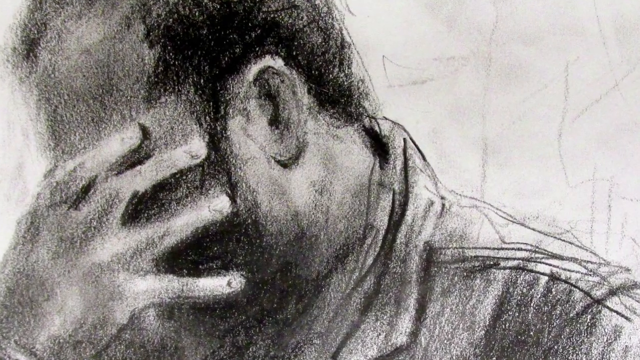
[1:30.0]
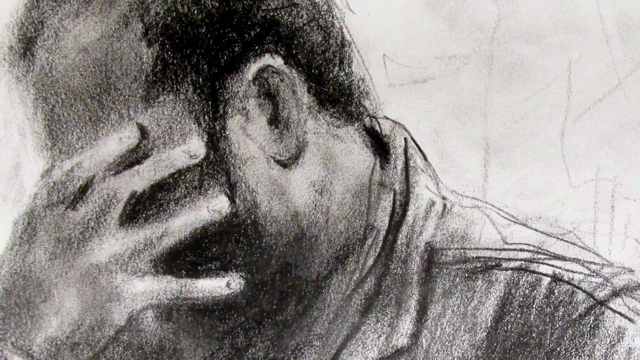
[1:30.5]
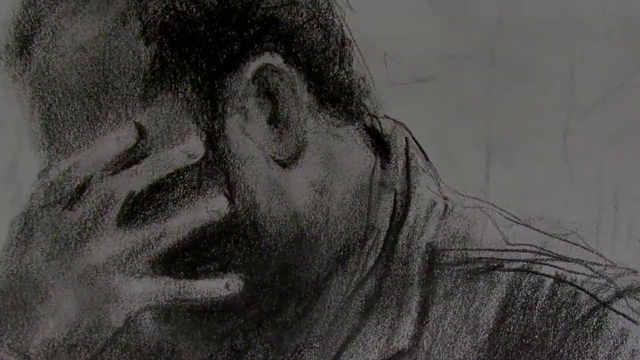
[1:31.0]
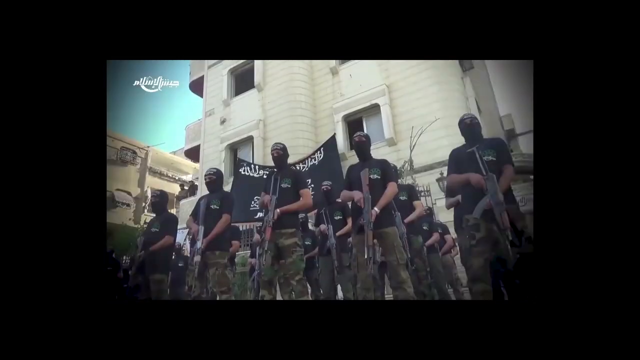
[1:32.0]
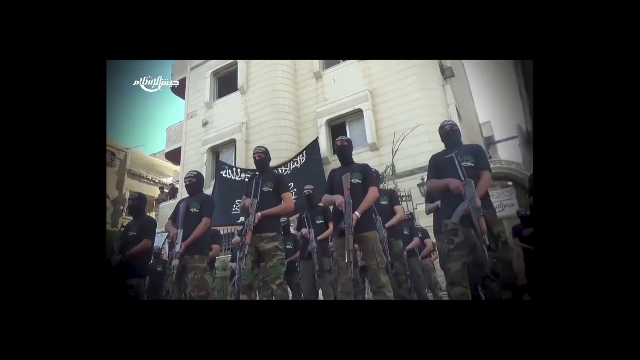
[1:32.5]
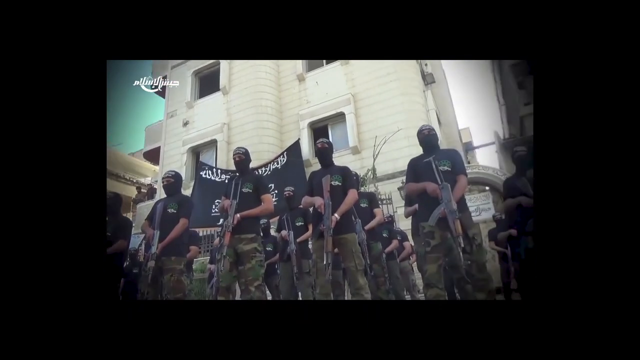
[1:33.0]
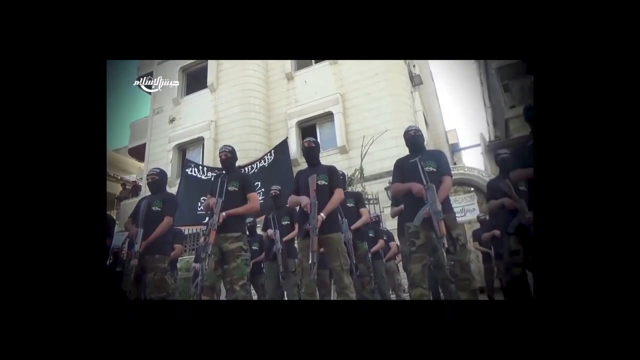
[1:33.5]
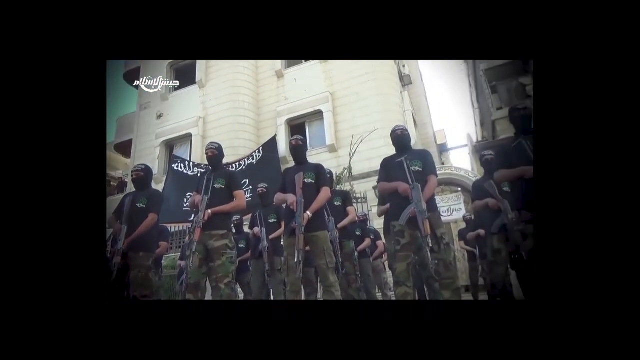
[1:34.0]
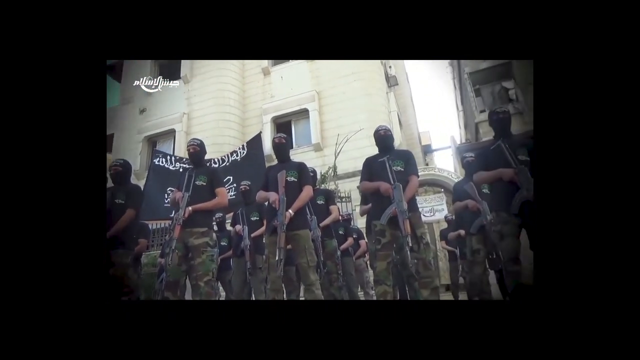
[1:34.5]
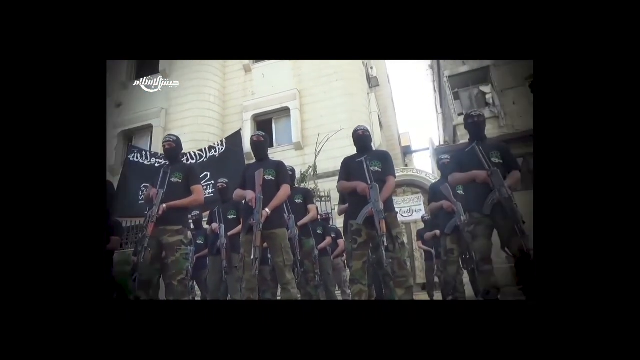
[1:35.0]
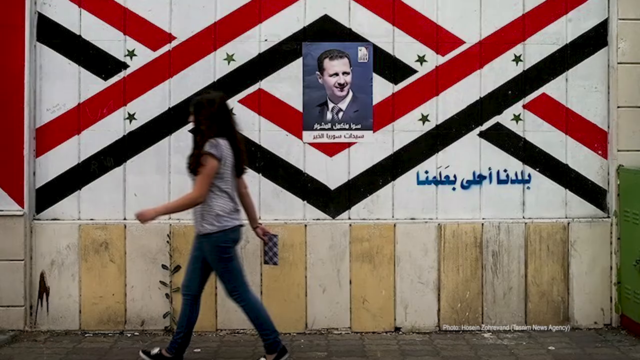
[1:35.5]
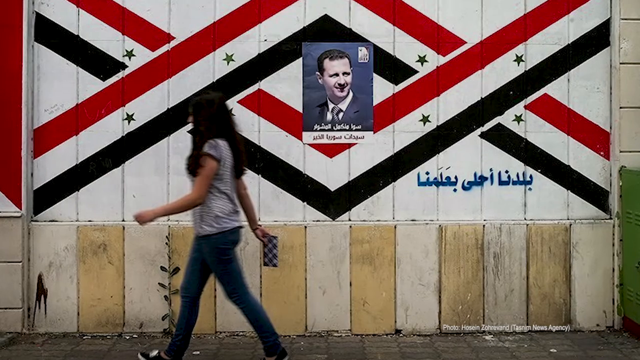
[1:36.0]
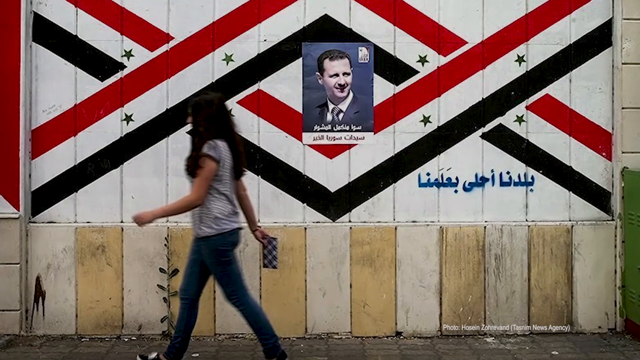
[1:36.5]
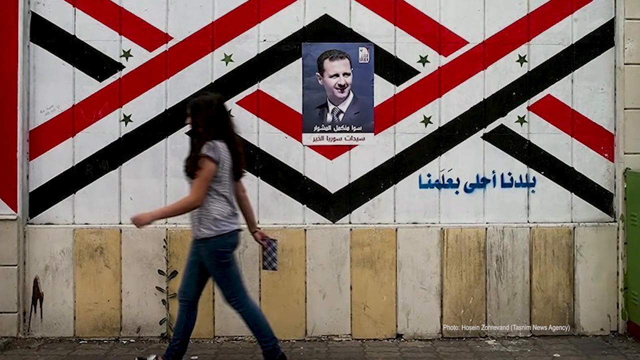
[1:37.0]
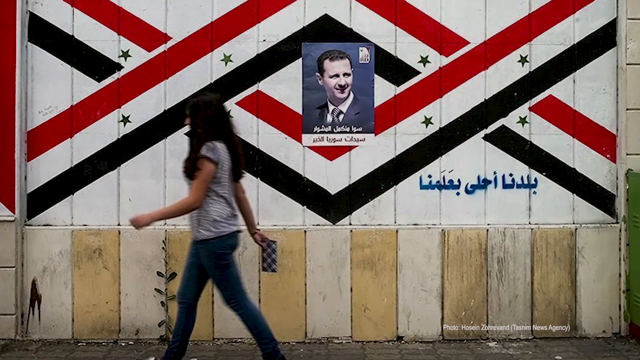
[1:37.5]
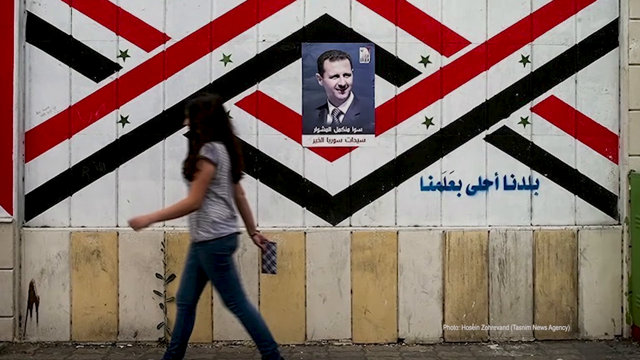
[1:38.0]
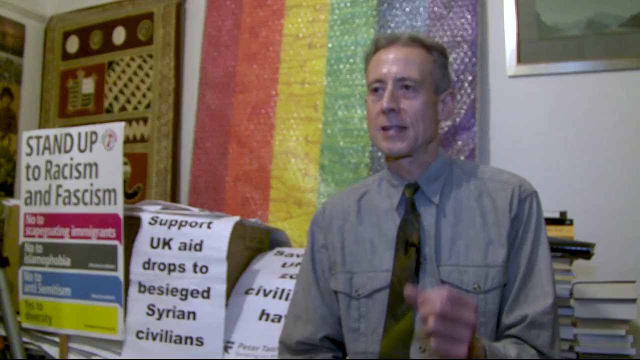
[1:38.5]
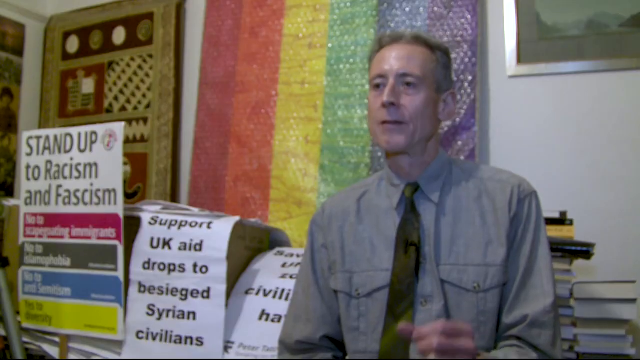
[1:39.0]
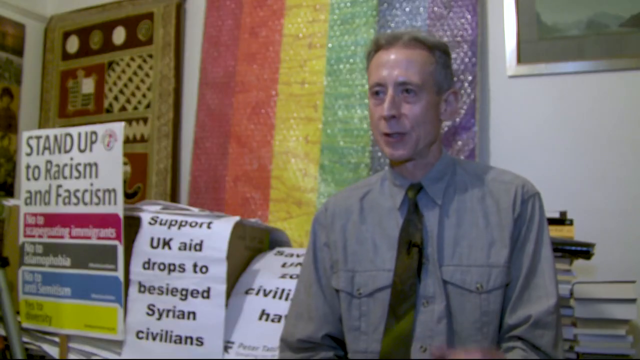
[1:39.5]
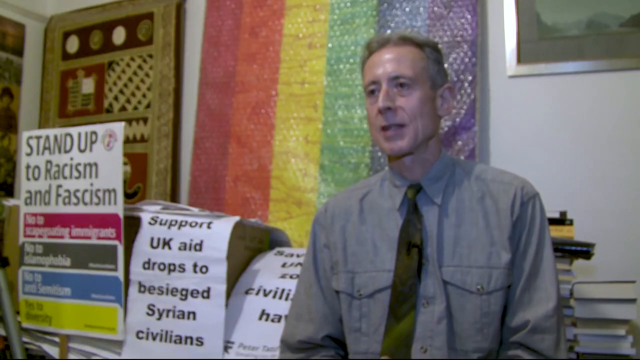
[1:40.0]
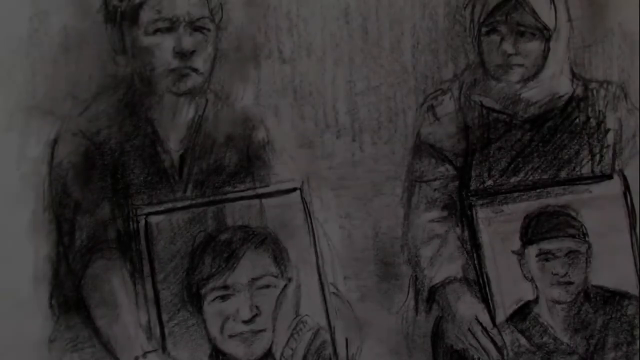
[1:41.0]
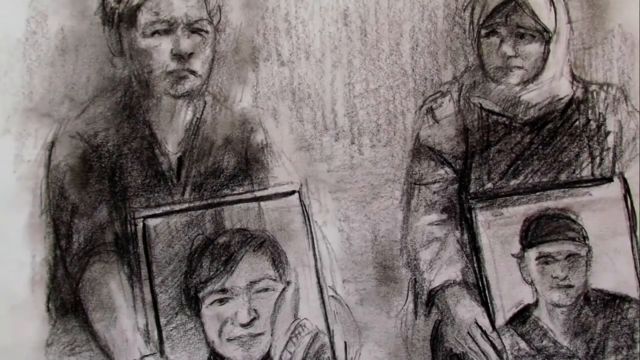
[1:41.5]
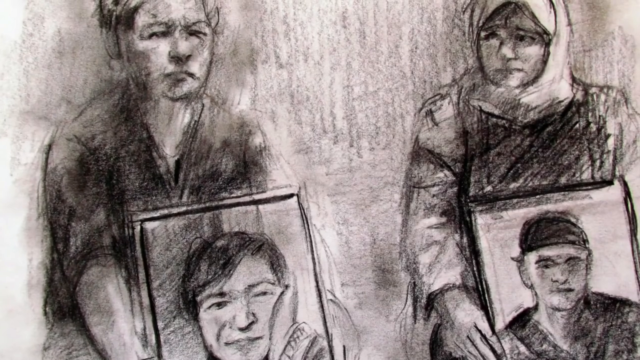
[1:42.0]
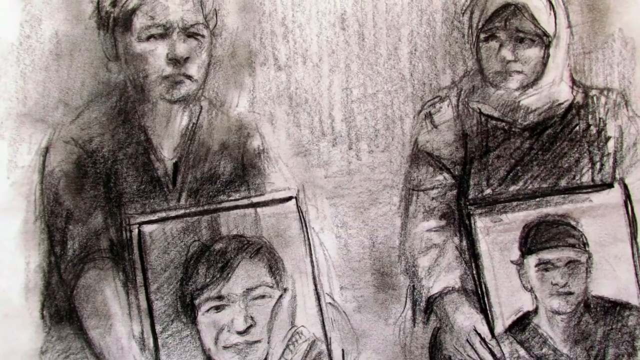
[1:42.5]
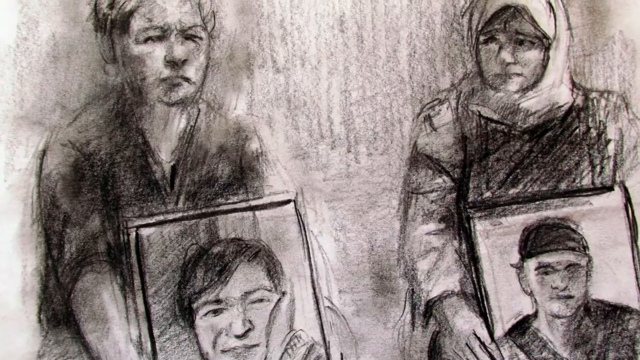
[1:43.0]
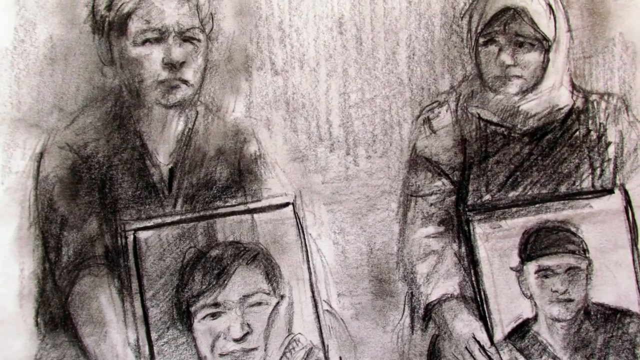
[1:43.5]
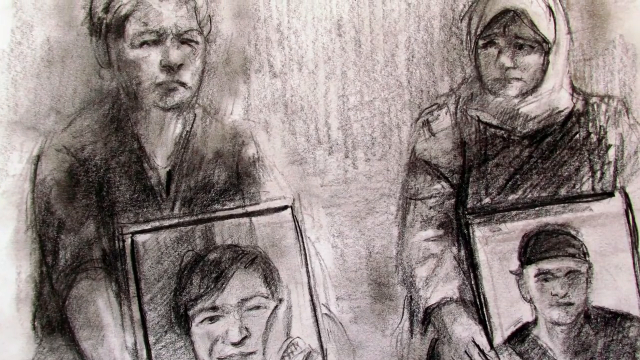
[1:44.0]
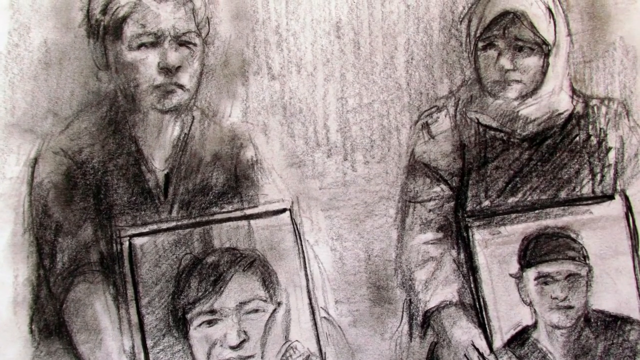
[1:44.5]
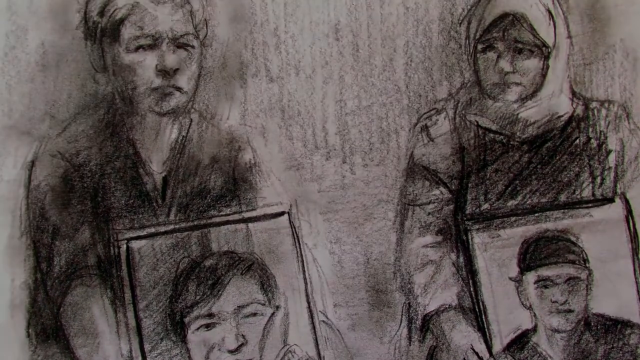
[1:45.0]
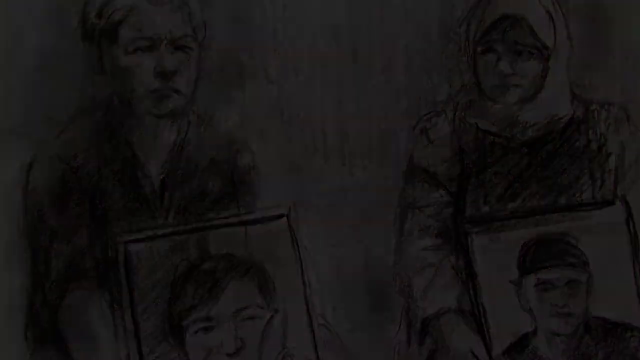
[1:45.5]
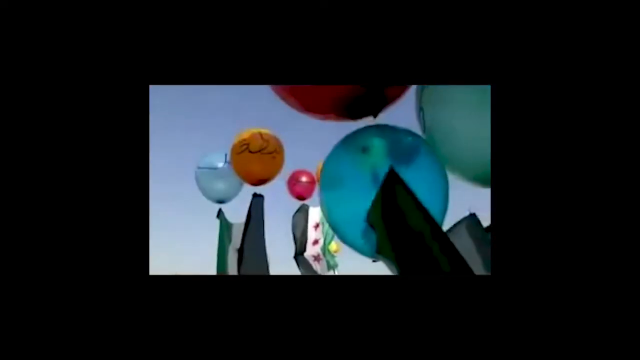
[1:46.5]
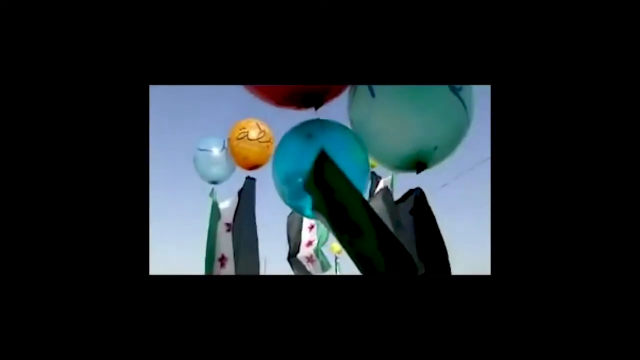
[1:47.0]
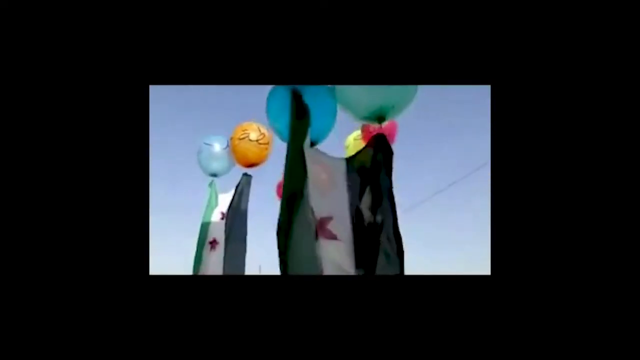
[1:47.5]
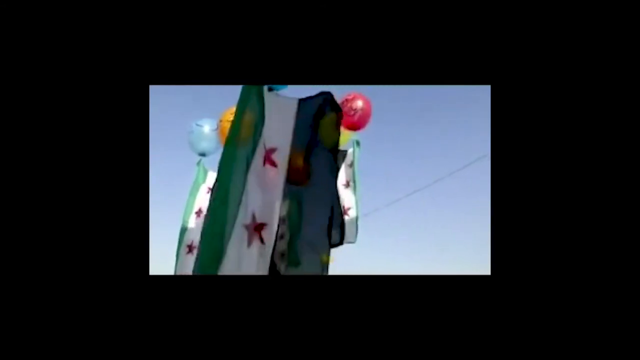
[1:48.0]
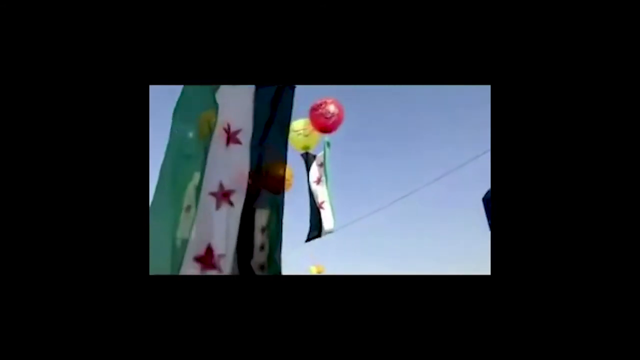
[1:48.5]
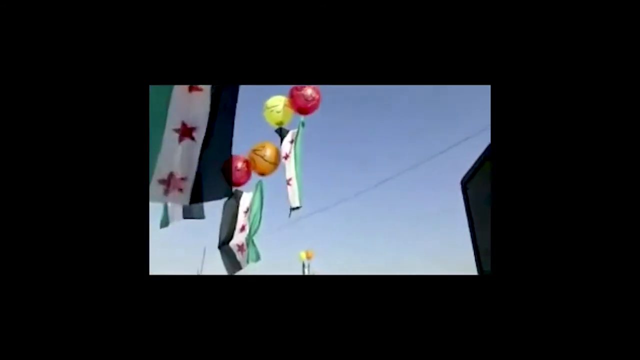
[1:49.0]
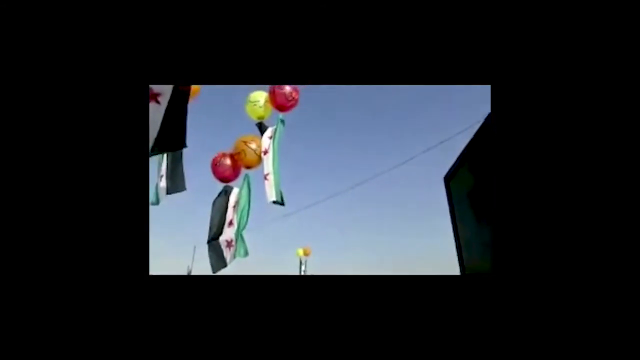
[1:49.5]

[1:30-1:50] People covering their faces carry big bags of guns. A mother carries a picture, apparently of a dead sibling or son. On the far right, a woman covering her face and wearing a hijab also carries a picture of a husband or son. Colorful balloons hold up a flag, possibly Iranian or Palestinian, flying it in the air. A man cries, covering his face with his hand.